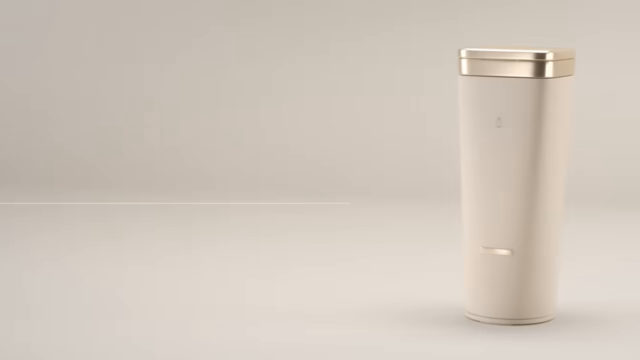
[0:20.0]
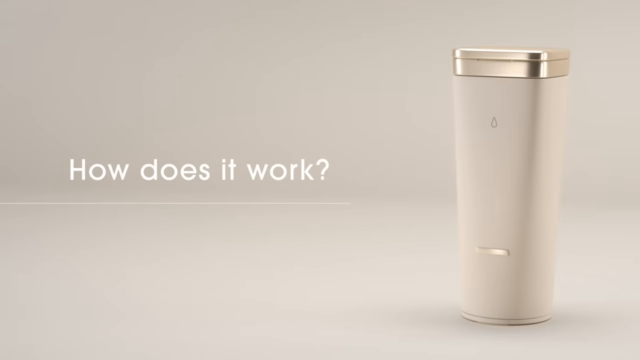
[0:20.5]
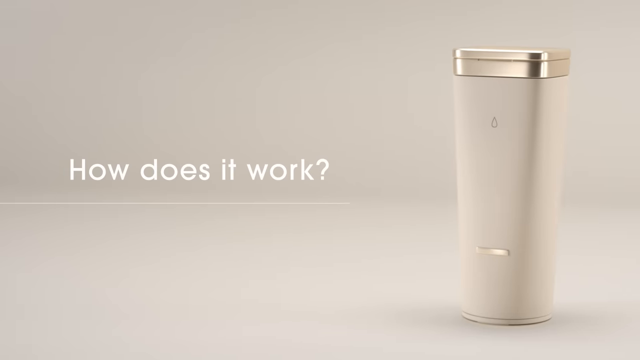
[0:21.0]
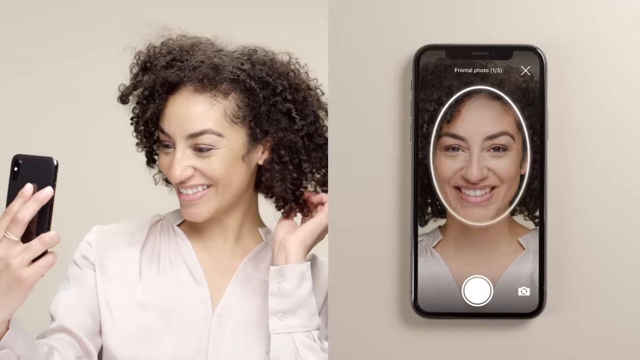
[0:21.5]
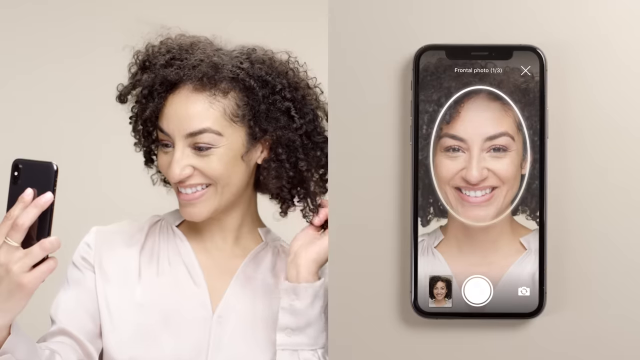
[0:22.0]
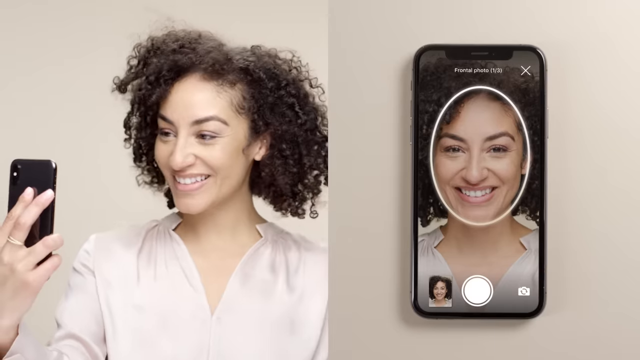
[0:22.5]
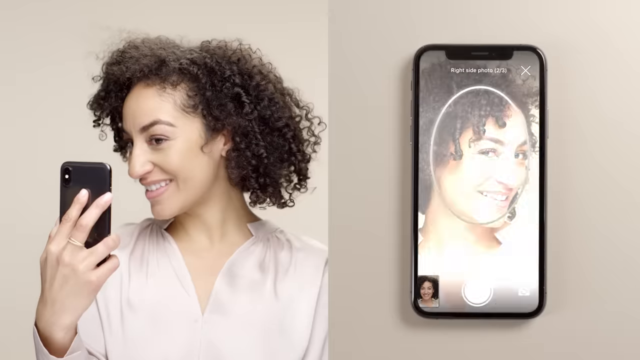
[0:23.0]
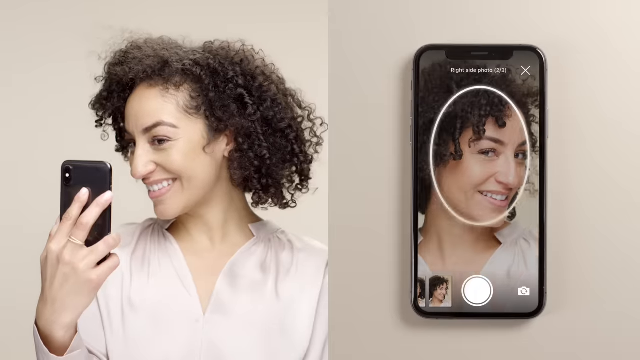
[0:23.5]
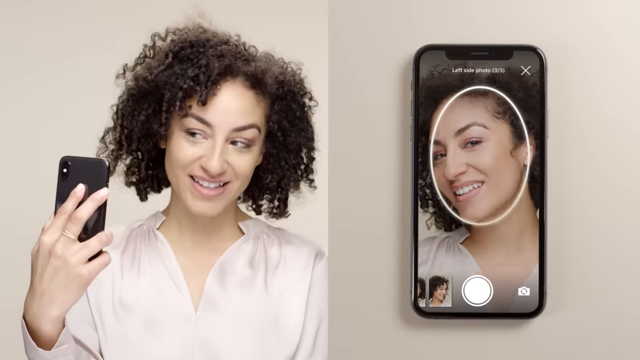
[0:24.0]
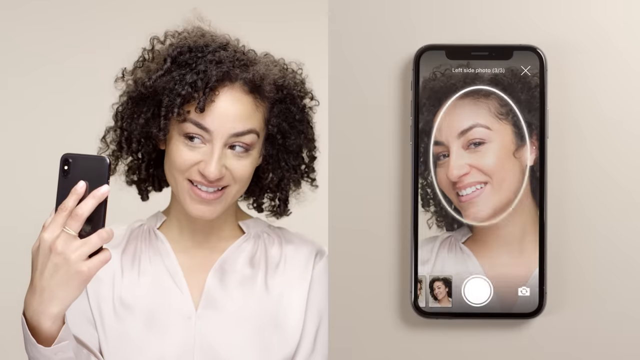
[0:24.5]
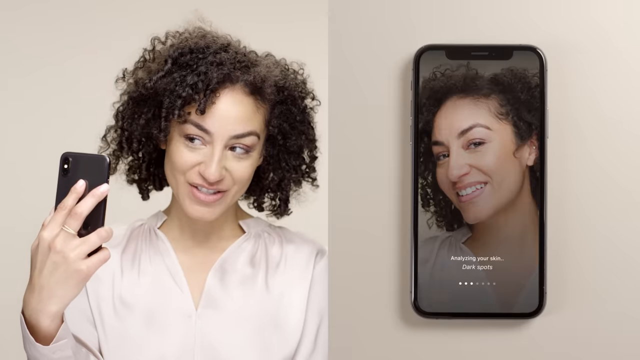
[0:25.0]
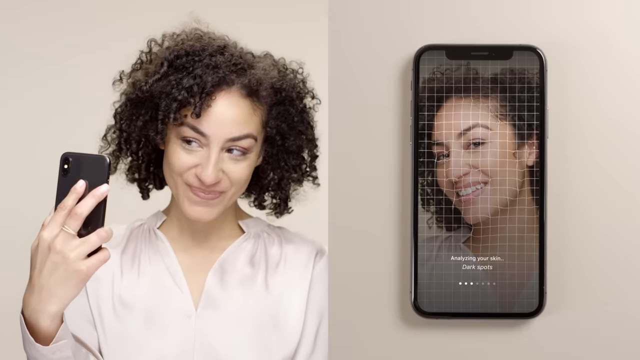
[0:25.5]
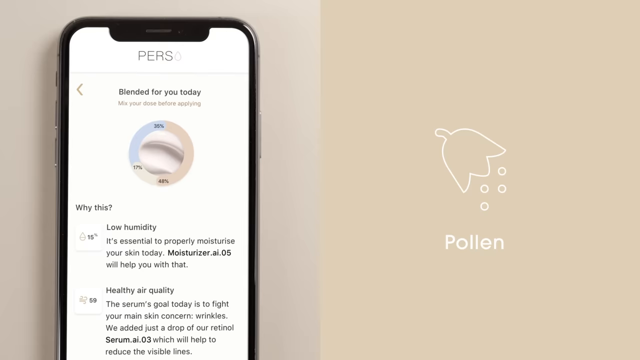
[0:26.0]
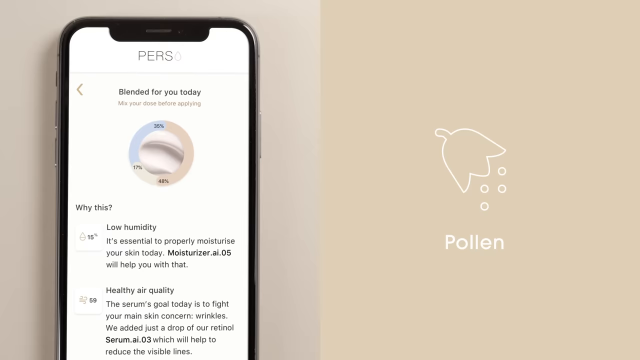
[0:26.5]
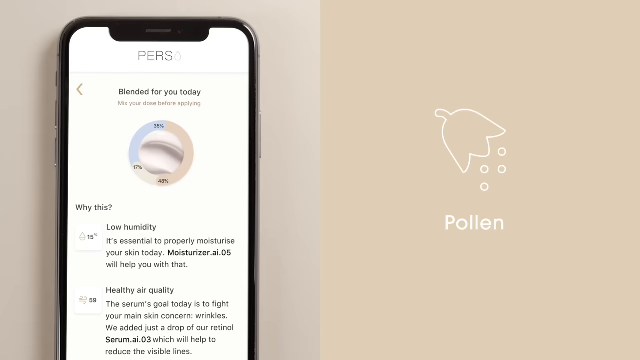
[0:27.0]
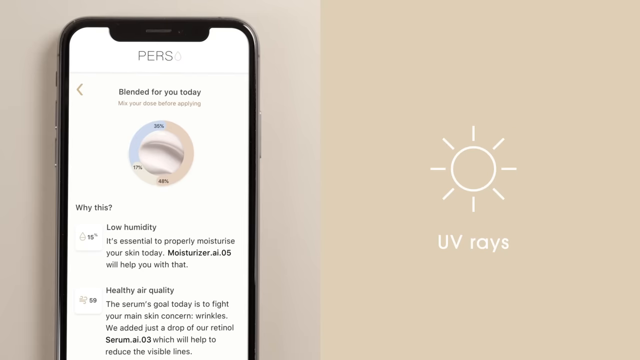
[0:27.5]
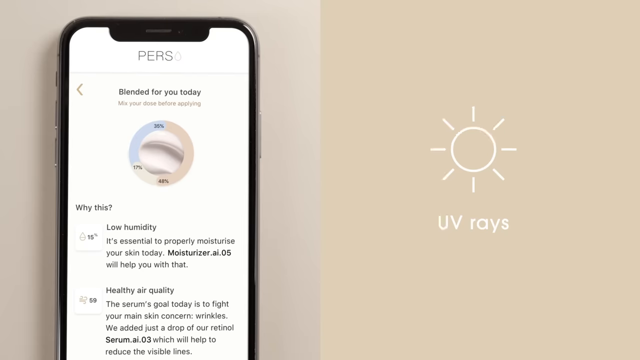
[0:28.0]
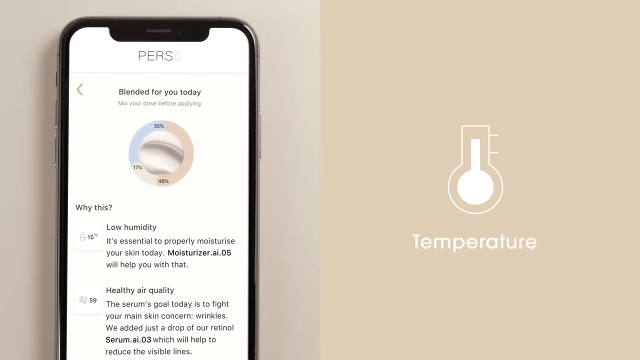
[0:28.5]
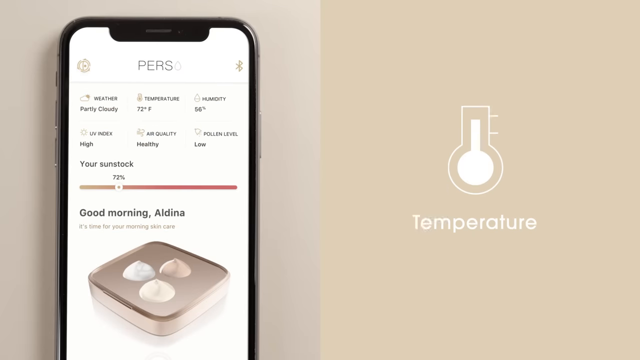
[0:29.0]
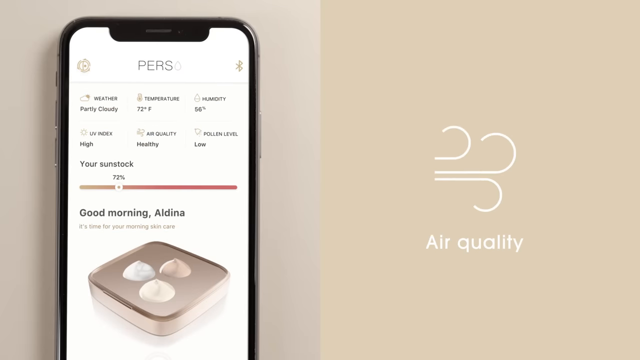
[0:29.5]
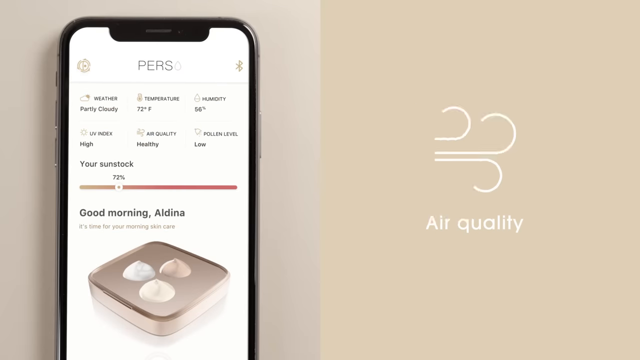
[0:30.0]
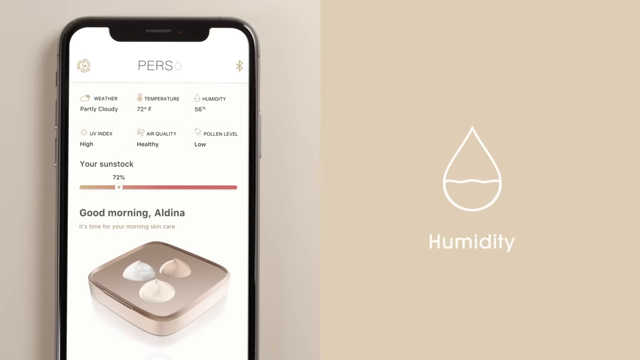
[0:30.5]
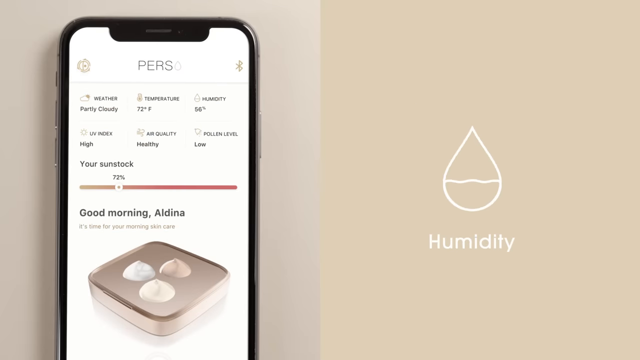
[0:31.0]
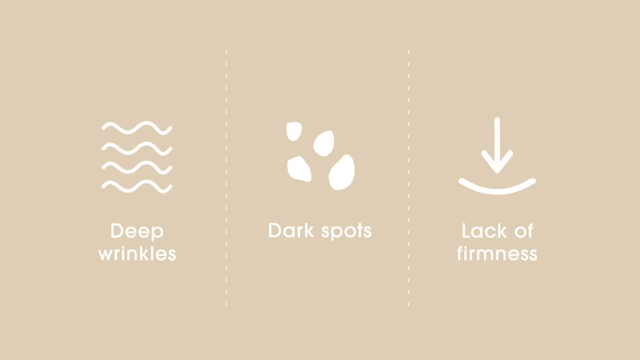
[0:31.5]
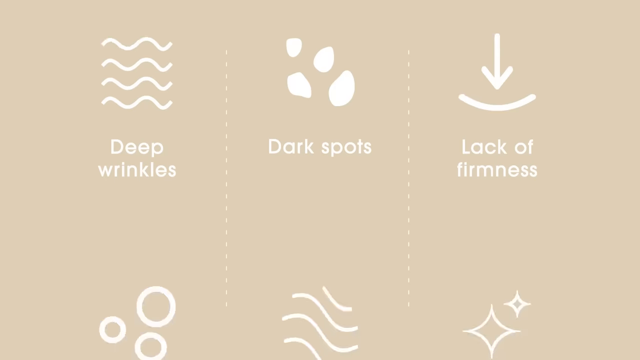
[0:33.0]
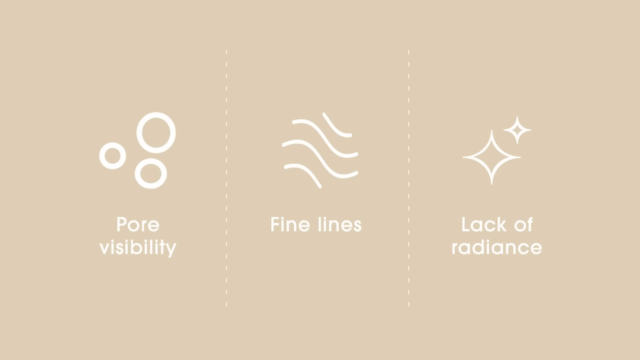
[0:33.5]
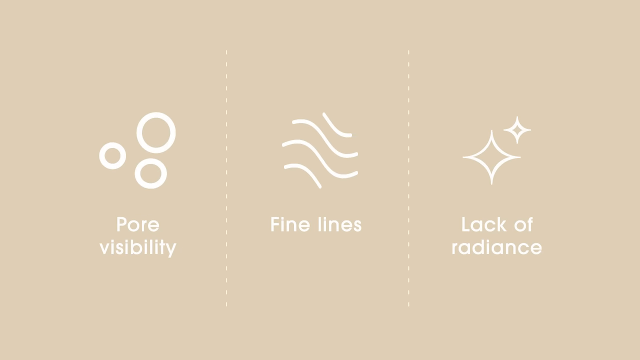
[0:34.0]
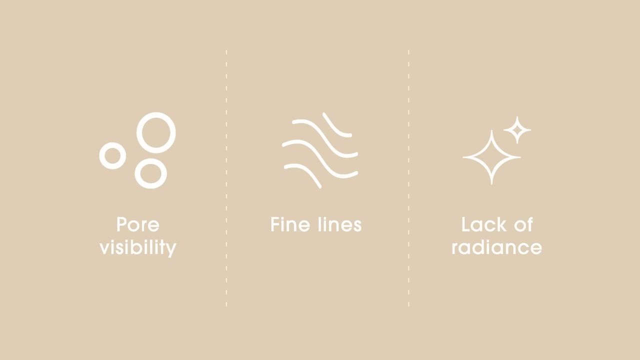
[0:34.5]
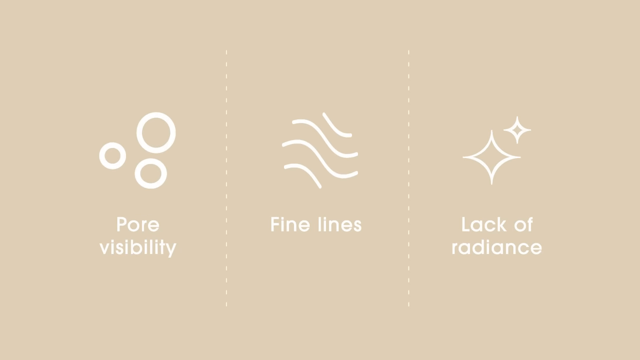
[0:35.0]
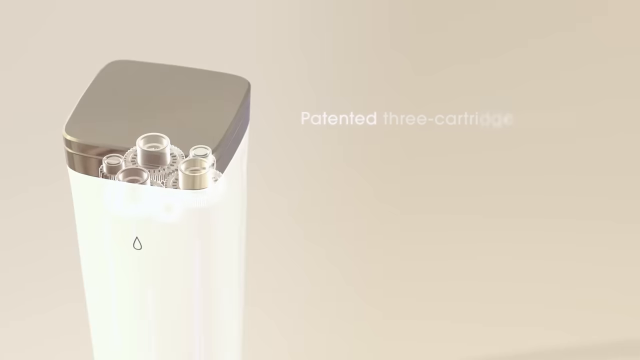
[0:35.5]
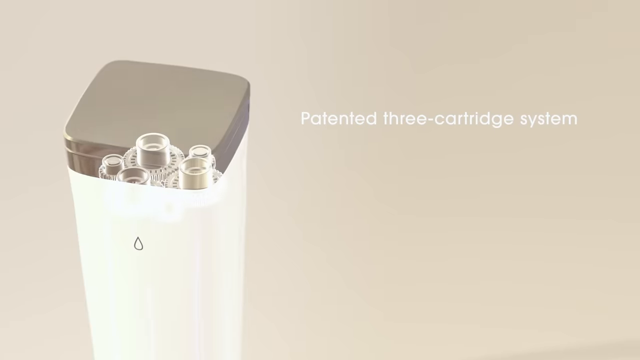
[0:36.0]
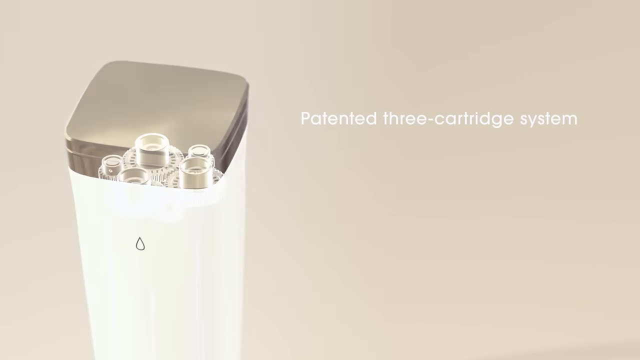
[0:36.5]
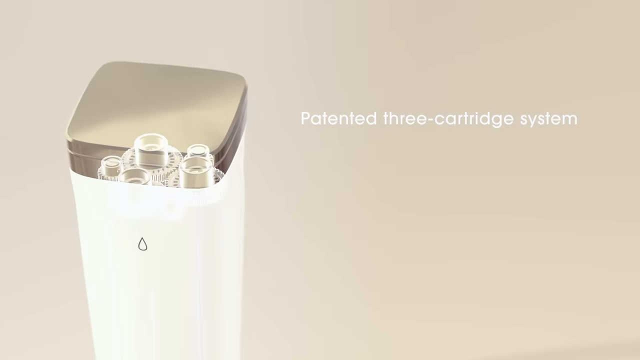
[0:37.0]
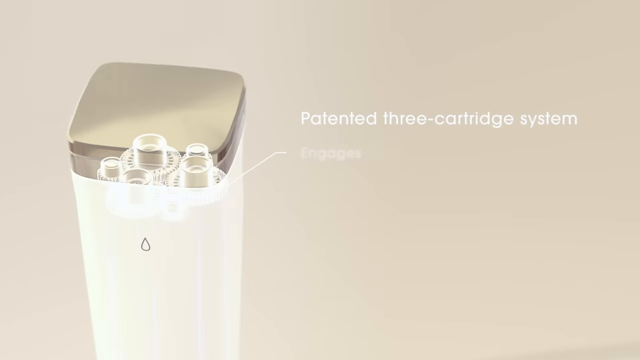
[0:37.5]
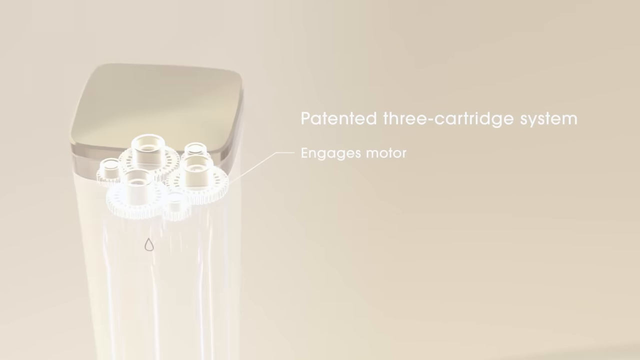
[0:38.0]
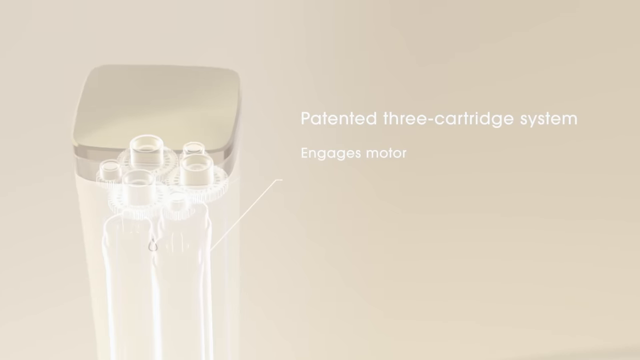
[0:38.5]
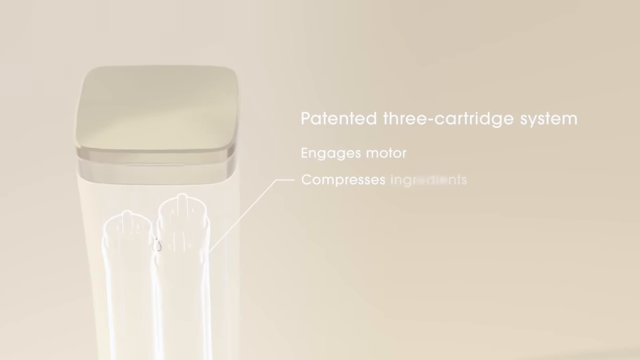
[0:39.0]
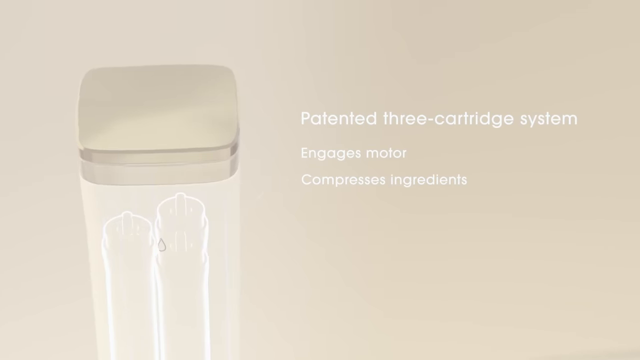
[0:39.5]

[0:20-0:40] An image of the product is on the right-hand side, with white text on the left reading "how does it work?". The scene transitions to a split screen. On the left, the lady with brown curly hair holds up her mobile phone and takes a selfie with her right hand while her left hand holds her hair. On the other side is the picture she is taking on the phone; it looks like she has to put her face inside a circle, and she does so successfully. She then takes a shot from one side of her face and then from the other side. The software on the phone puts a grid over her face and scans it, followed by a results page covering UV rays, pollen and temperature, as well as air quality and humidity; it looks like an app giving her results on her skin. A screen split into three follows: an image of curly lines labelled "deep wrinkles", then dark spots, then lack of firmness. A transition slides up to another scene split into three, showing poor visibility, fine lines and lack of radiance. An image of the product then appears in an almost blueprint-like, x-ray view, revealing motors inside and a patented three-cartridge system; these parts move around, and it then compresses the ingredients.